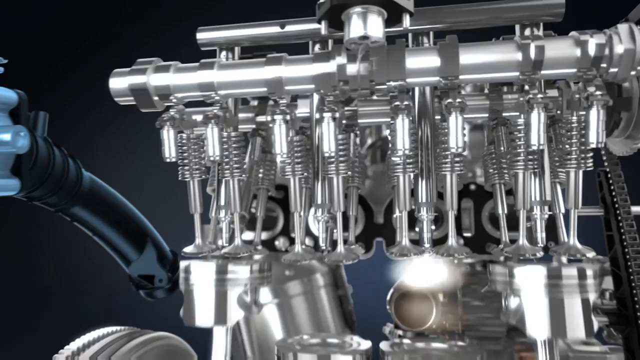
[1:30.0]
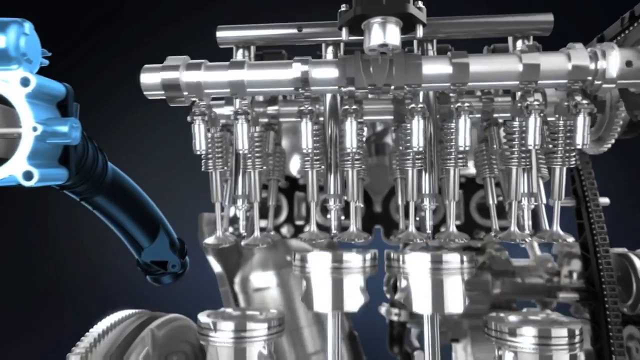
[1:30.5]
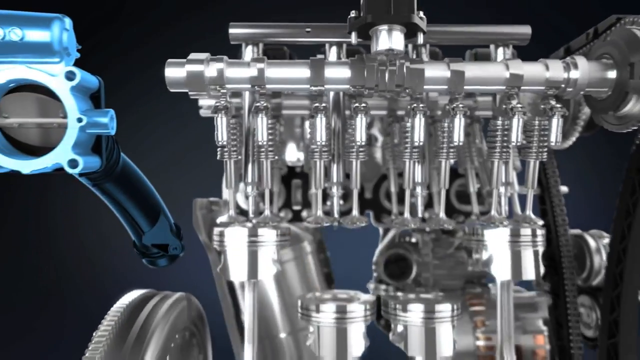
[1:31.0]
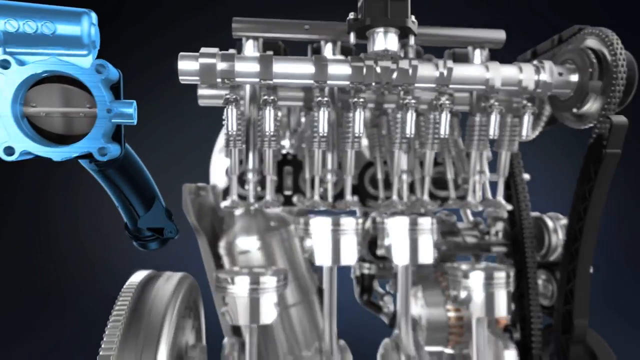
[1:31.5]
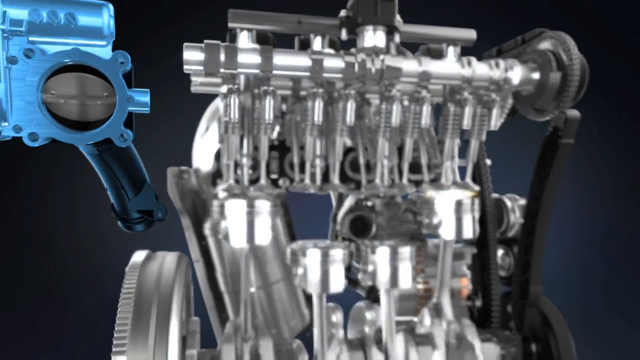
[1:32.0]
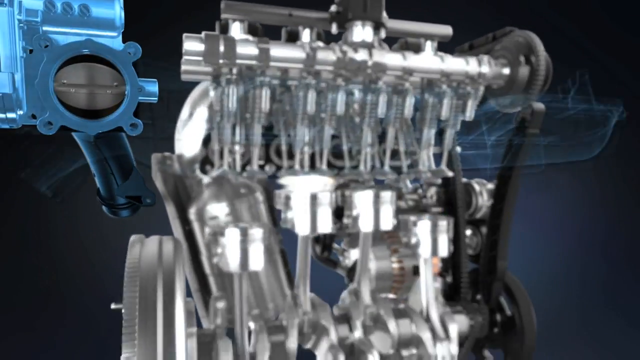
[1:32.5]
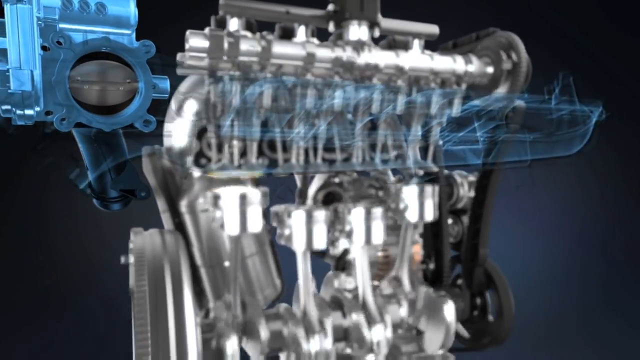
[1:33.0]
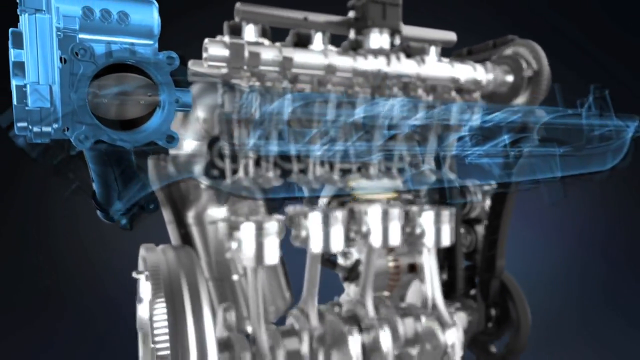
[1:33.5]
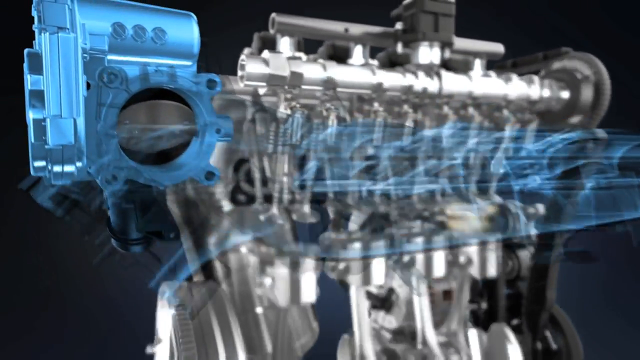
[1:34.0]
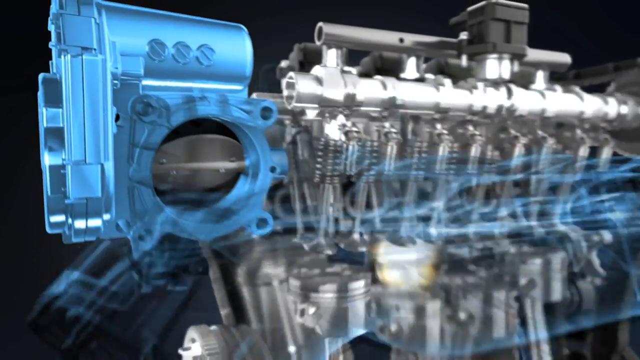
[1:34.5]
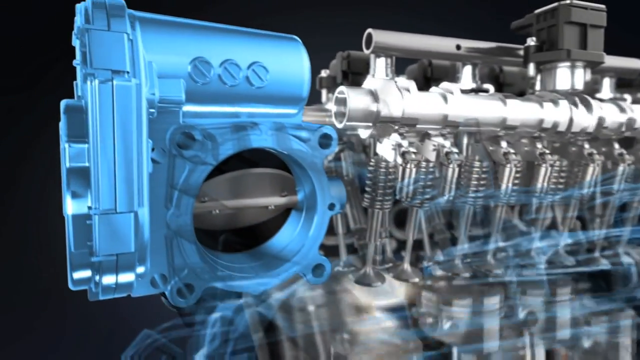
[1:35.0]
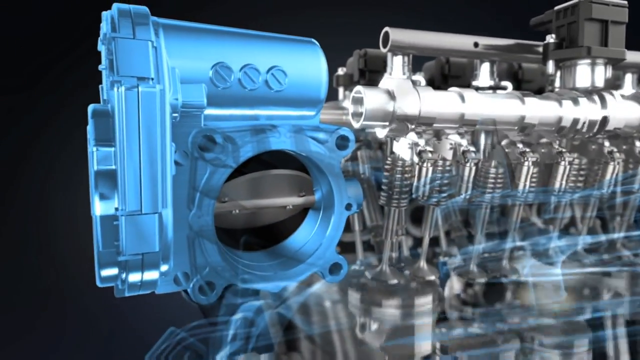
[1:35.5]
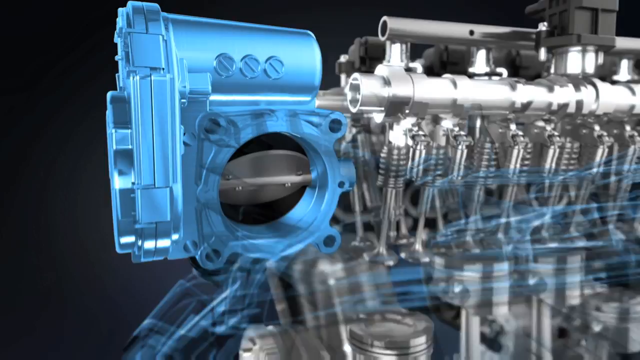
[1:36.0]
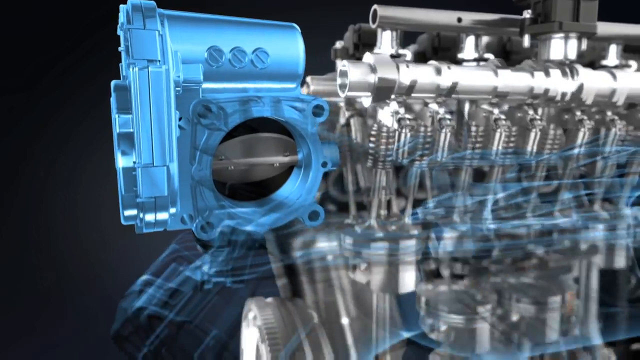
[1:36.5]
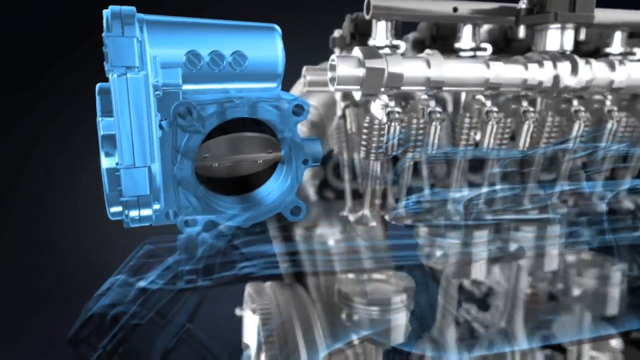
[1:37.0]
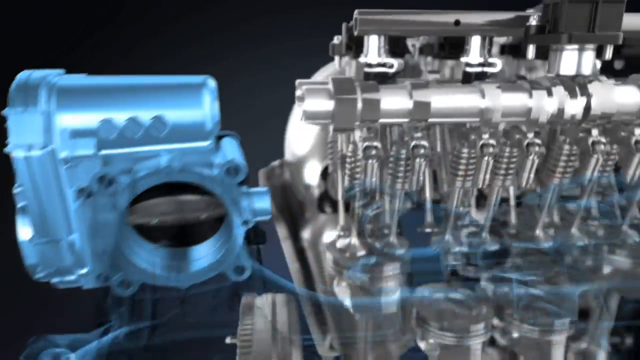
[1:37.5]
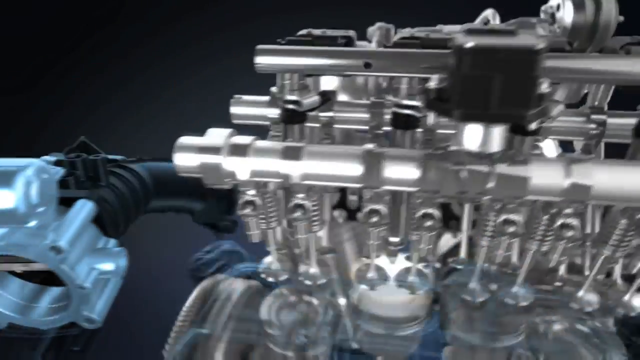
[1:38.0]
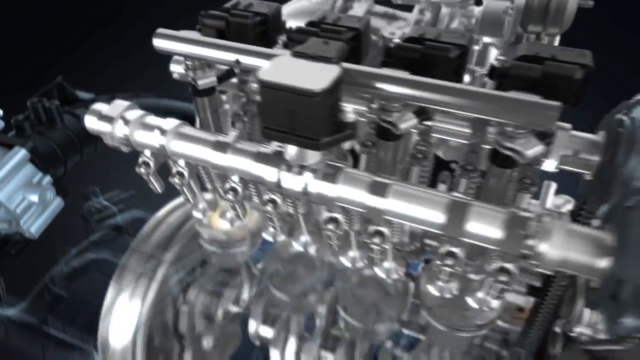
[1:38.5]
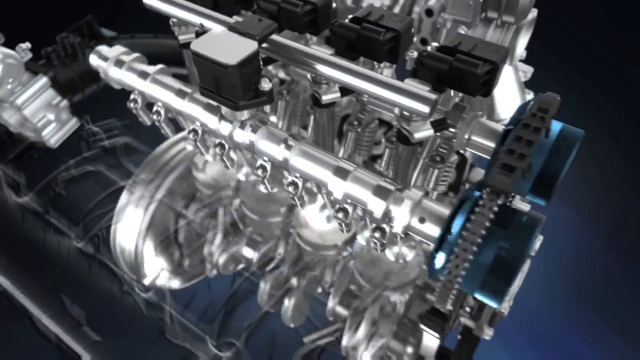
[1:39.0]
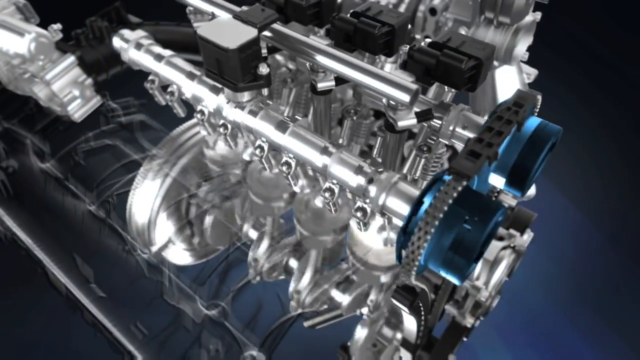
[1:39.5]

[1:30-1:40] An engine with all kinds of movement in the background is shown, and it looks digitally produced. At the bottom, something spinning pushes something else up and down and around in a circular motion. Something almost like a black conveyor belt system spins and goes around, making the motor area go up and down. Off on the left is something almost like a cord that might be a component or part of the engine. The view zooms in on a somewhat blue area and then shows that section from above.